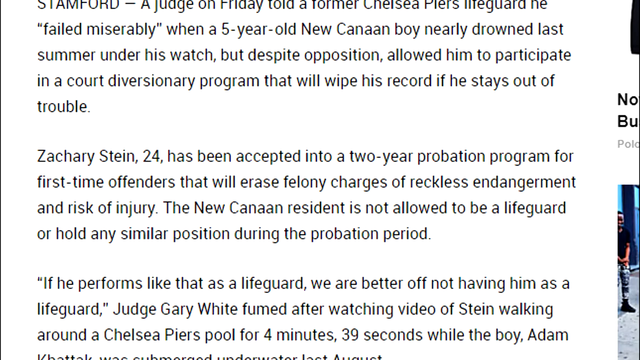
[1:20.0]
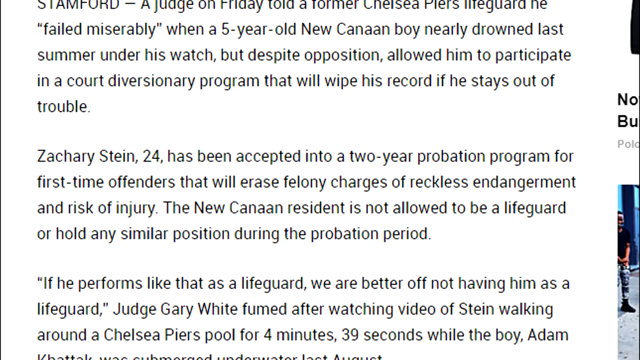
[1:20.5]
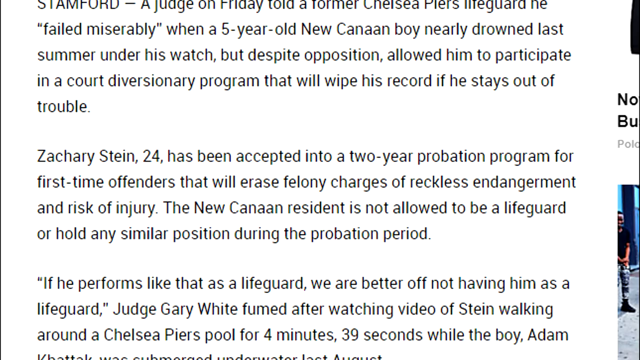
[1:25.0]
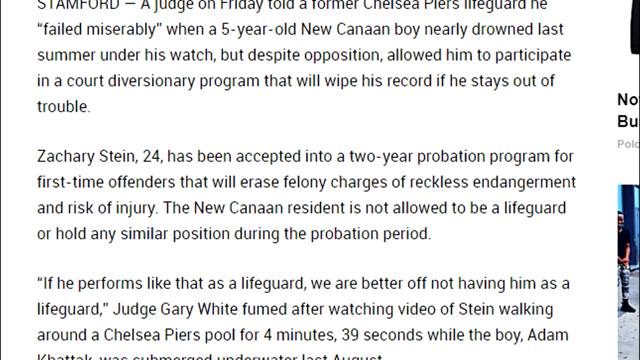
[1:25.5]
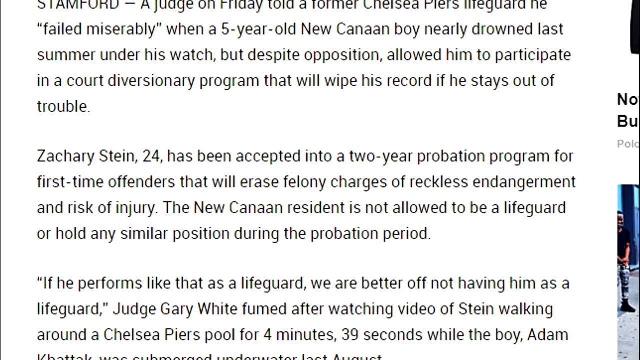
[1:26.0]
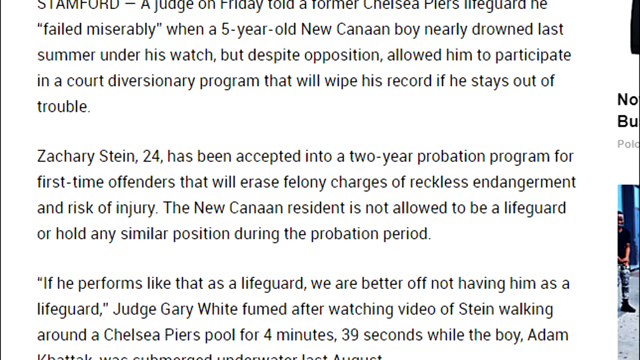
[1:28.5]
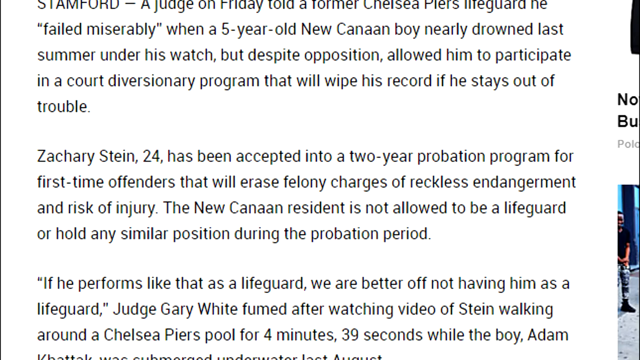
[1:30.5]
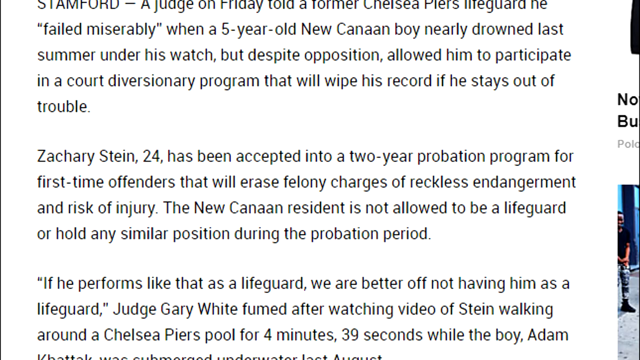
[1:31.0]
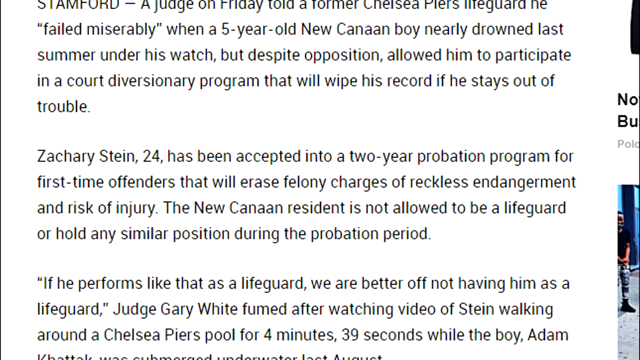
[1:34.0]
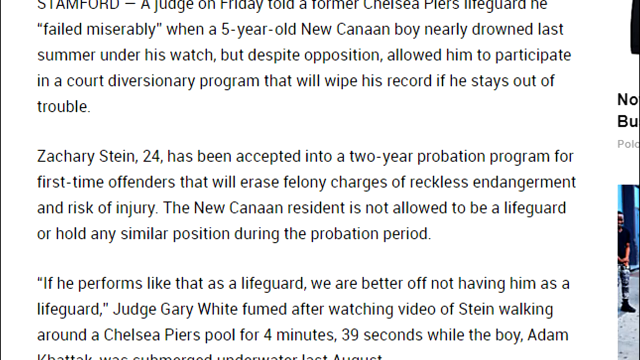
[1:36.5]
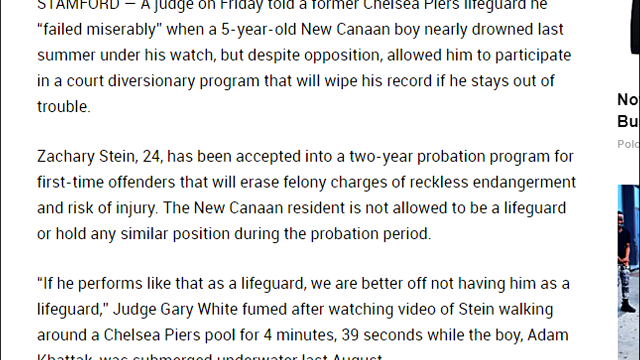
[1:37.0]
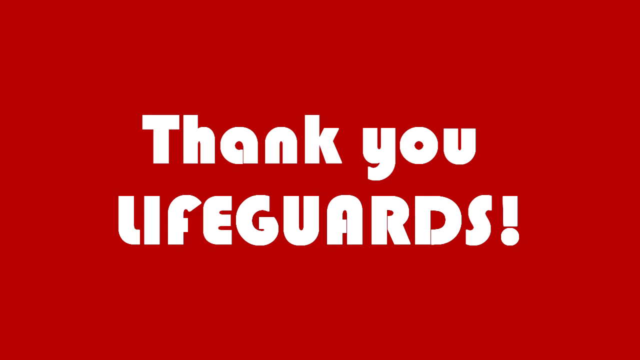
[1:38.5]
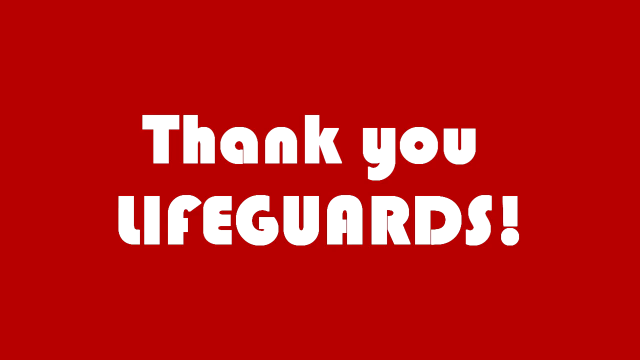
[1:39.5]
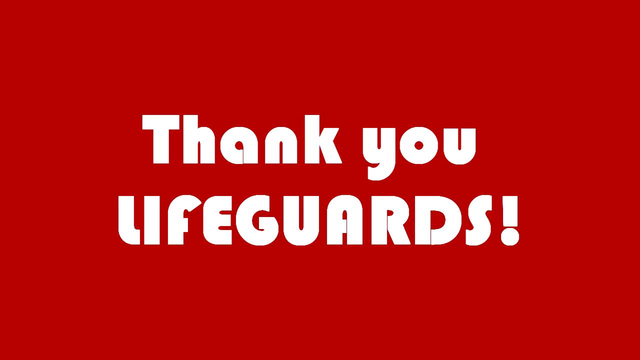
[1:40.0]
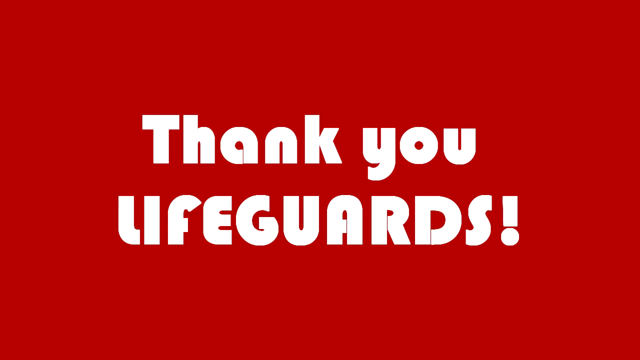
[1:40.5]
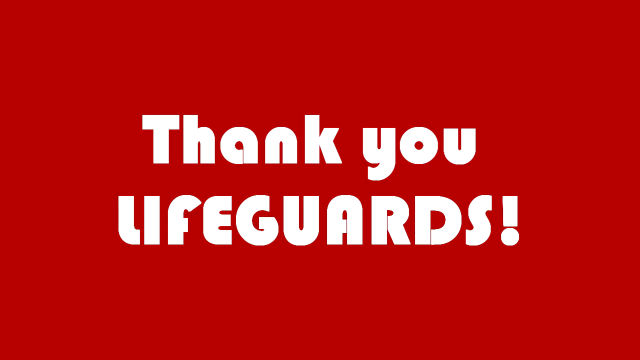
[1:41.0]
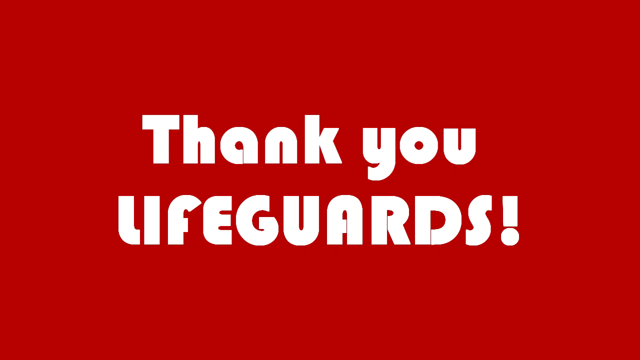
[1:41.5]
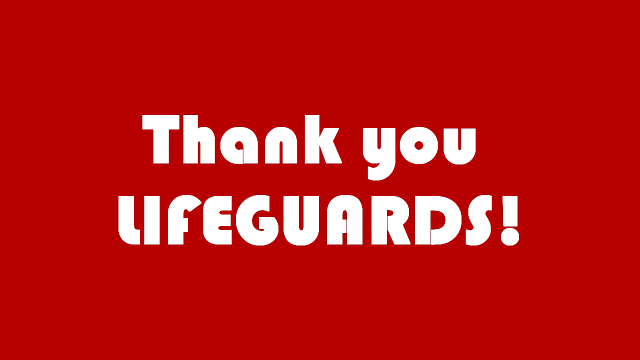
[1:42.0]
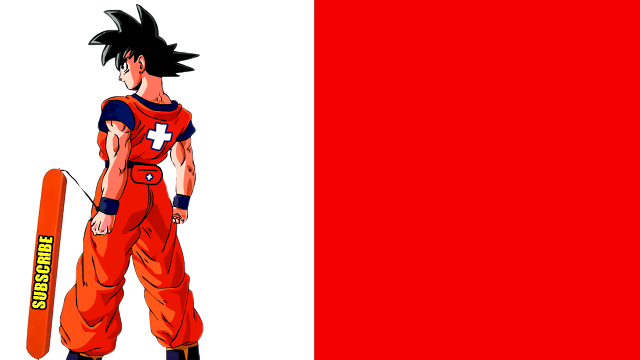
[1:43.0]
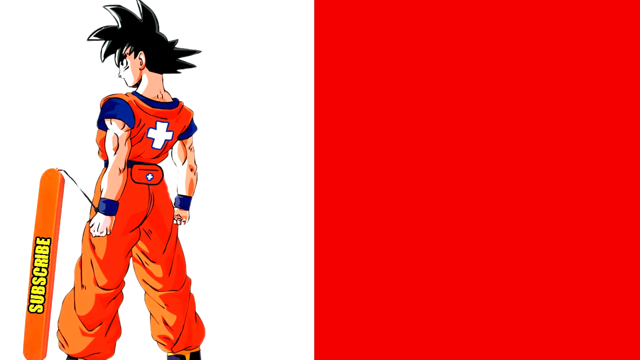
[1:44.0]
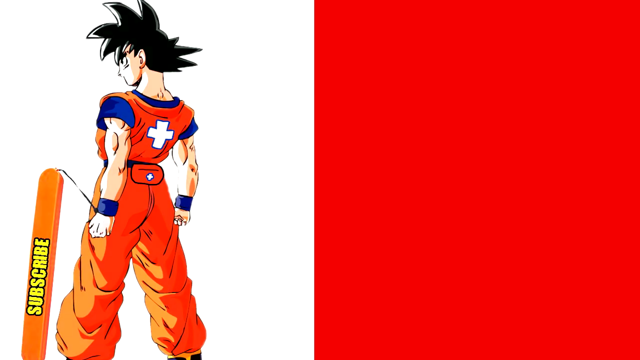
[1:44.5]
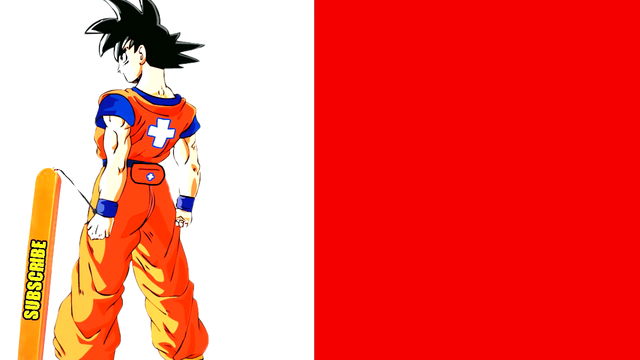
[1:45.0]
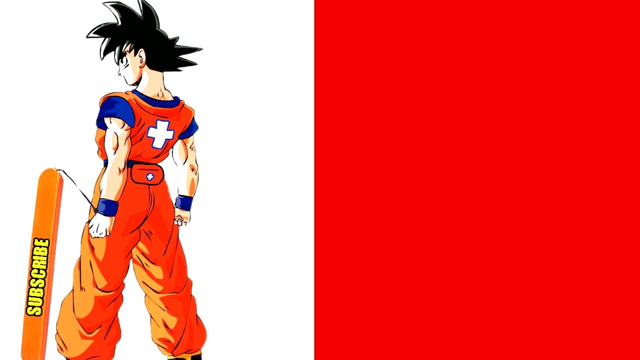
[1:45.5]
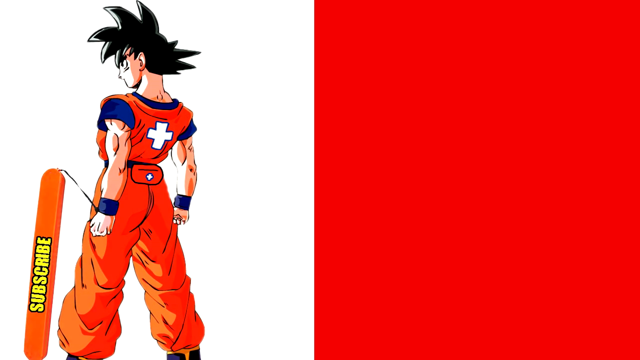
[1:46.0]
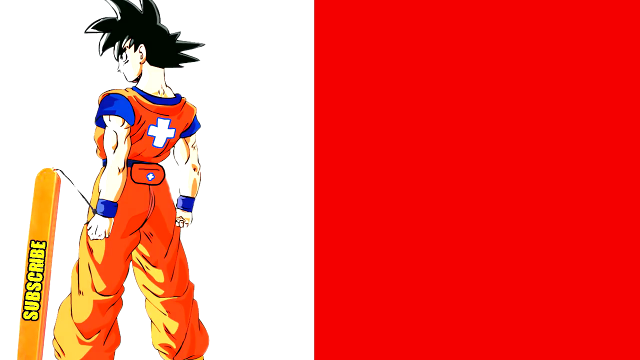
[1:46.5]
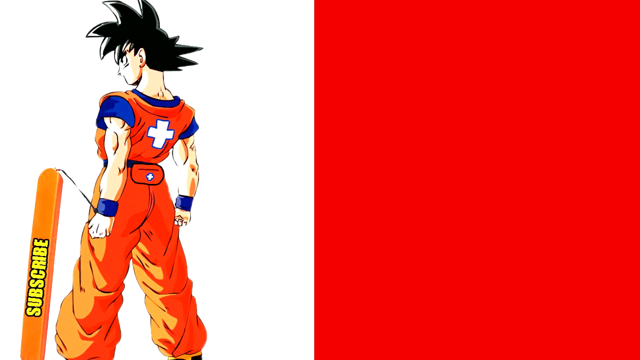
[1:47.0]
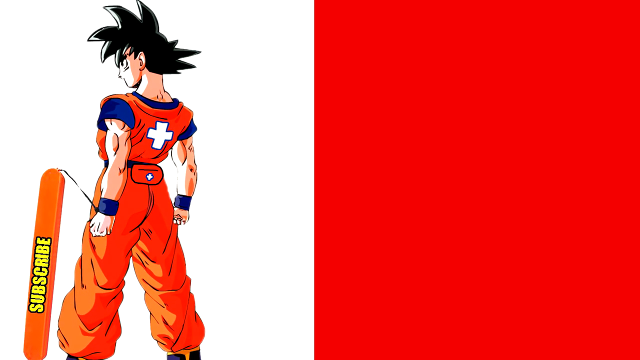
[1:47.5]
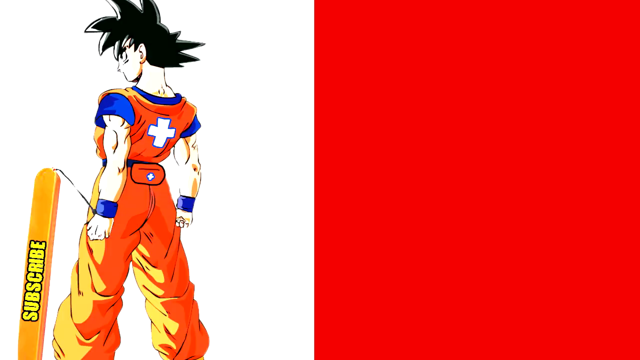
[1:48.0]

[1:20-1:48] The lifeguard is shown in court, along with documents stating that the lifeguard in Connecticut pleads not guilty in a child near-drowning case. He wears a black suit with a gray shirt and a gray striped tie, and his lawyer wears a gray suit with a plaid shirt and tie. Footage of the kids playing in the pool follows, and the video returns to the woman in a pink top and a floral black and red skirt, with the image of the kids at the pool on the big screen.